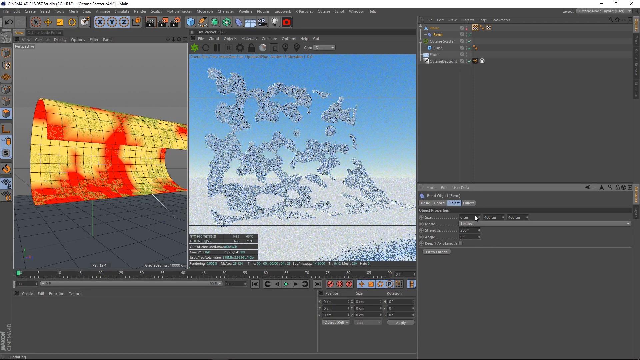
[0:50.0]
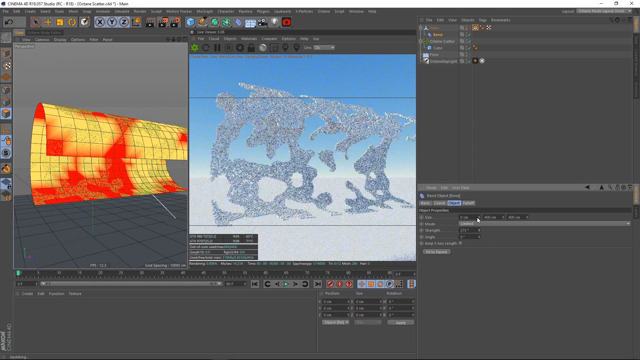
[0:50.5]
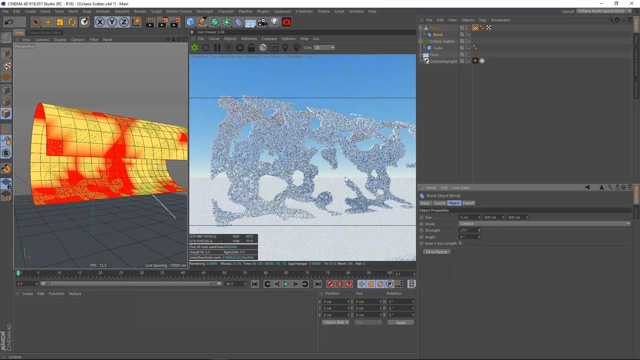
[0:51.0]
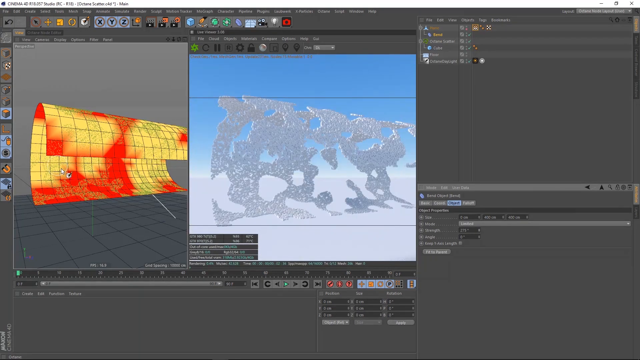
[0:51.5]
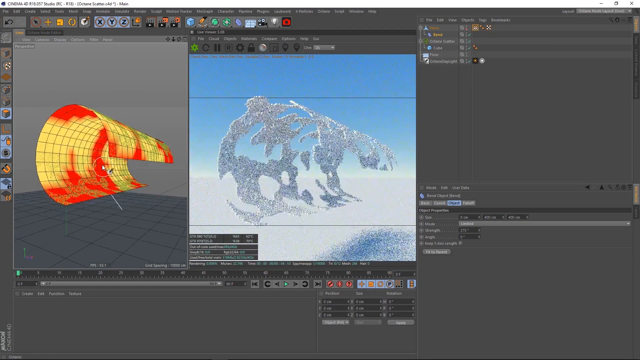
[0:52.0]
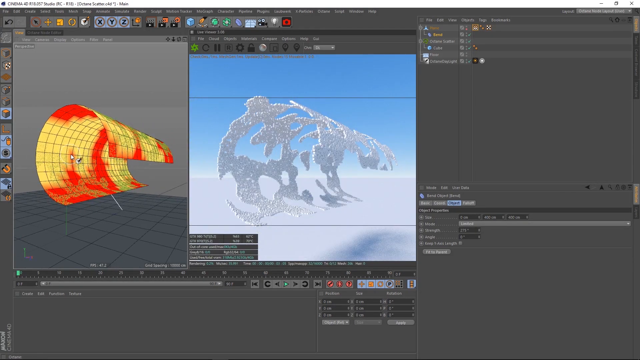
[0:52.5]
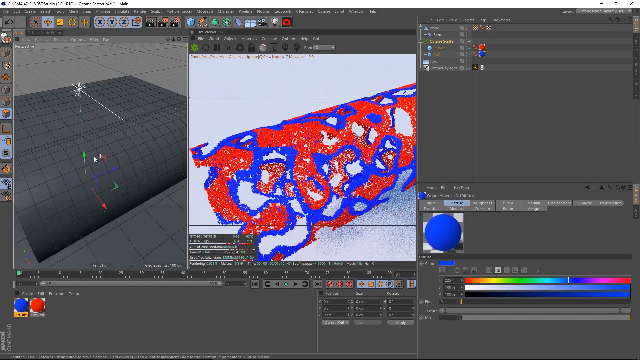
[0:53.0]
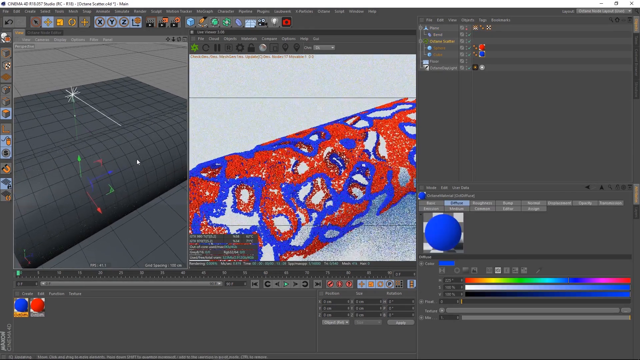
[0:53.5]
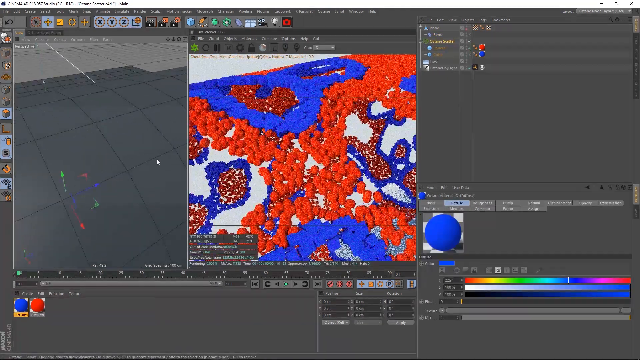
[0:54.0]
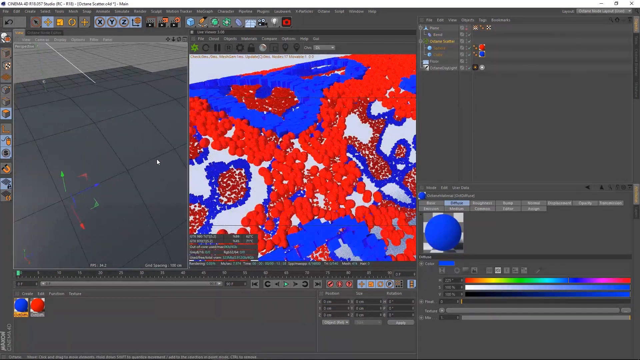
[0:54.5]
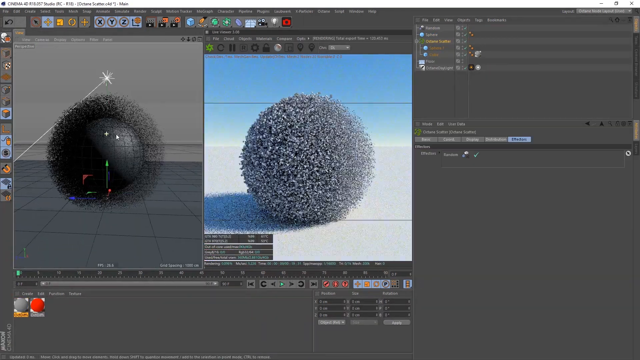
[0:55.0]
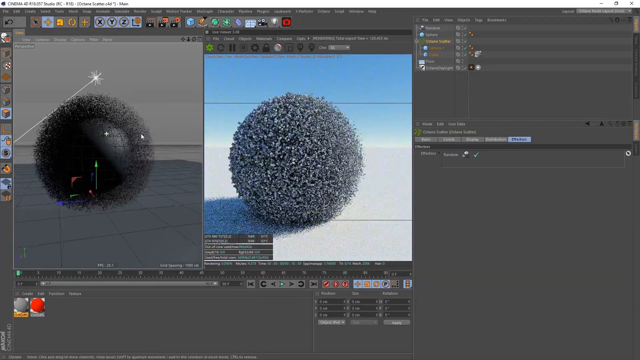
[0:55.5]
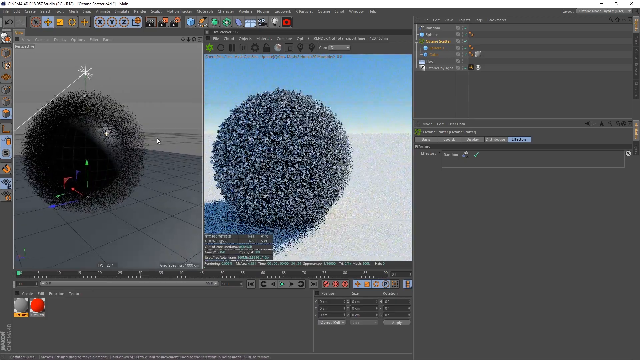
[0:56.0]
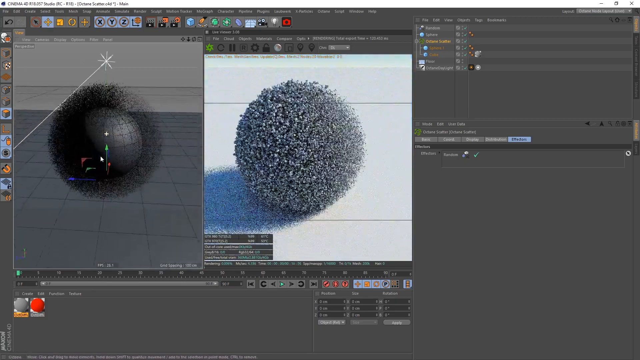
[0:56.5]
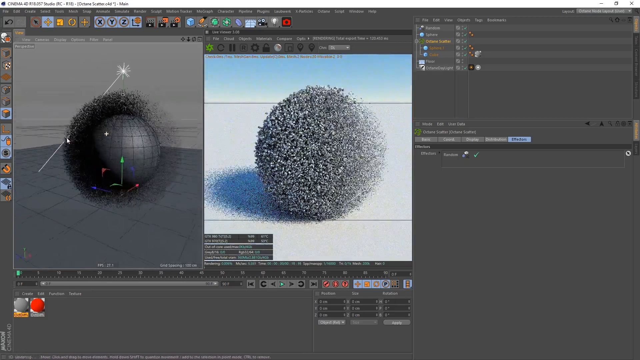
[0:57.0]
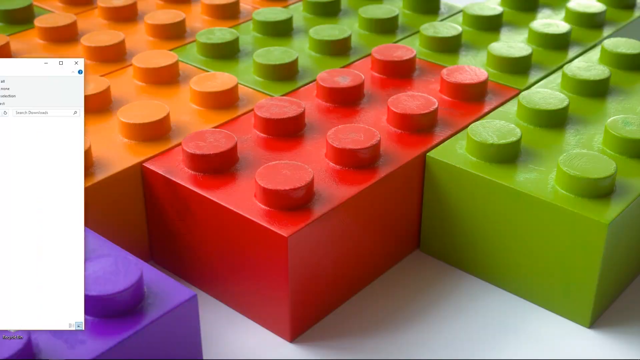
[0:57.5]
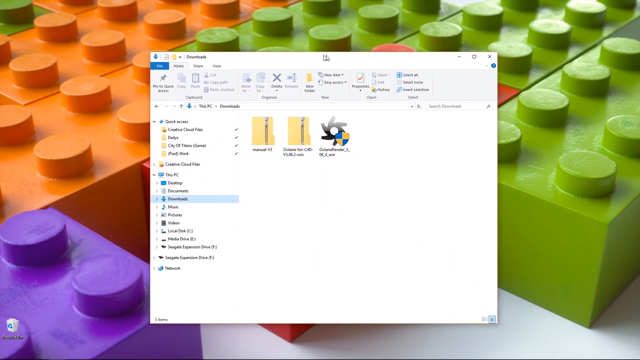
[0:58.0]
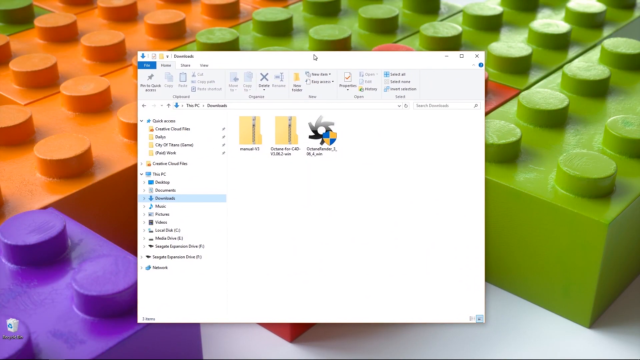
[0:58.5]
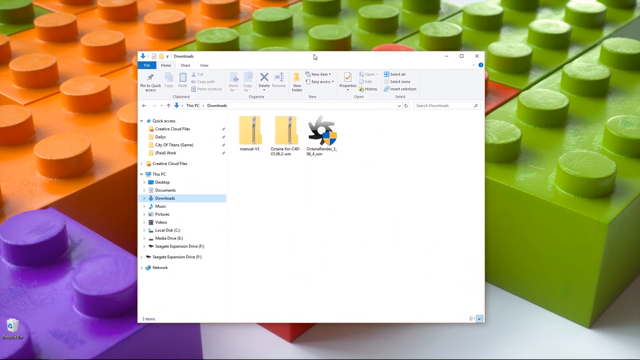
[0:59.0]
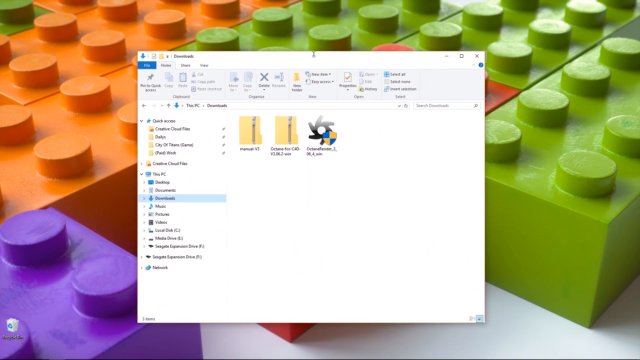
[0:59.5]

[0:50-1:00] In Cinema 4D, there is some form of yellow and orange object on the left side of the screen. The object is moved and bent downwards, as if it is a piece of paper being rolled up, slightly, so that it forms an archway. In the middle of the screen is the same shaped object, but where the orange colors are it is transparent, and where the yellow colors are it shows a material, creating a big slab that looks like it has holes in it. This one also bends over into an archway when the object on the left is bent. The screen cuts to a different object on the left and in the middle of the screen, which looks more like a tube. The version in the center is red and blue, while the one on the left is all gray. The view zooms into this, and then cuts to another object in Cinema 4D: on the left it looks like a circle with a bunch of fuzz around it, all black, and on the right a rendered version looks like a gray and white ball of fuzziness. The screen then cuts to the desktop home screen, where an open folder is pulled into the center of the screen.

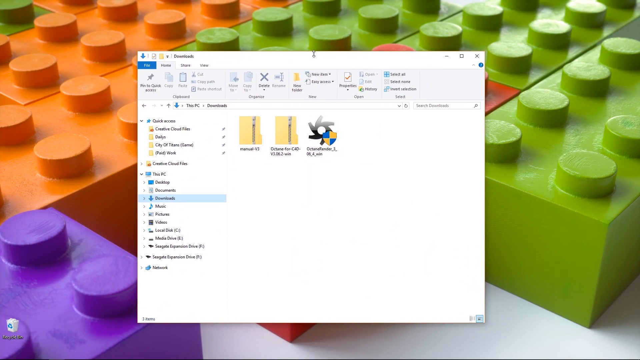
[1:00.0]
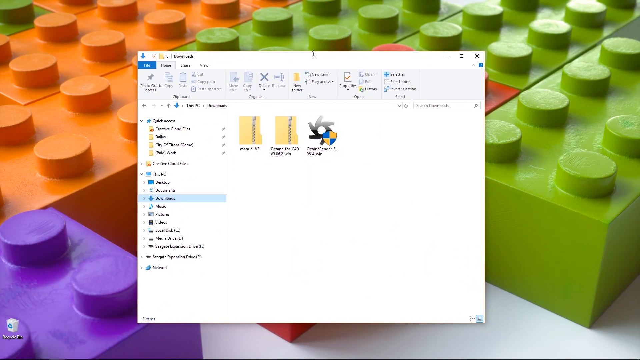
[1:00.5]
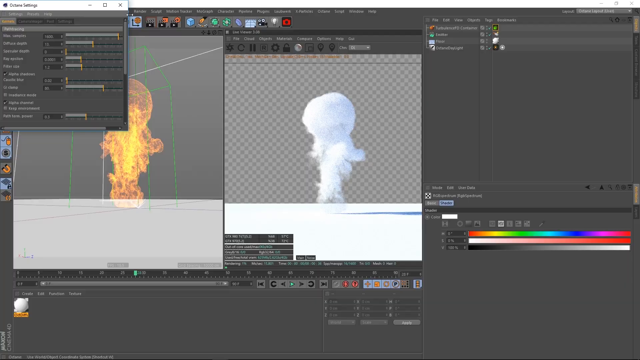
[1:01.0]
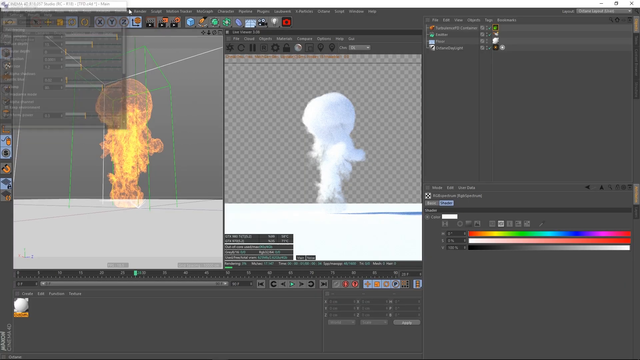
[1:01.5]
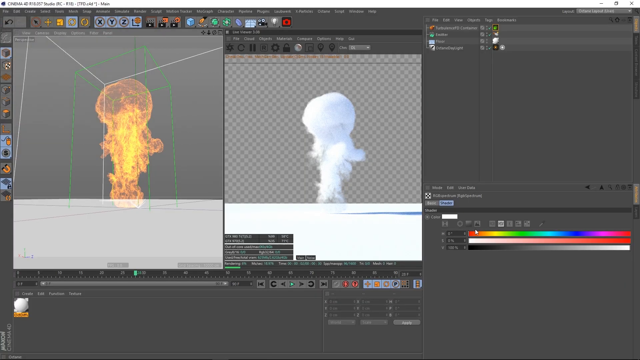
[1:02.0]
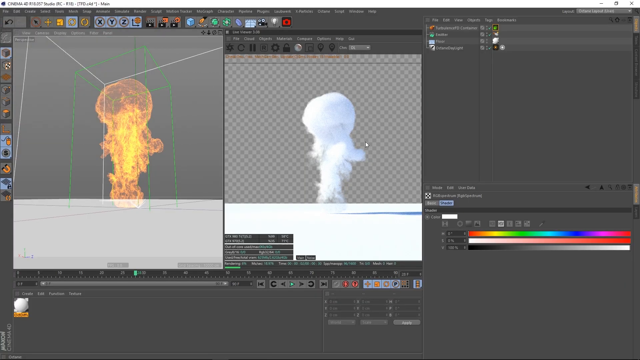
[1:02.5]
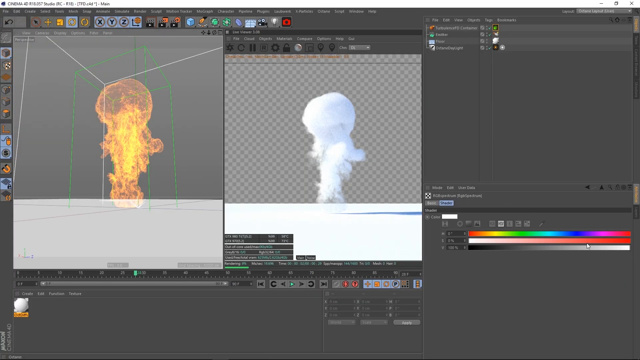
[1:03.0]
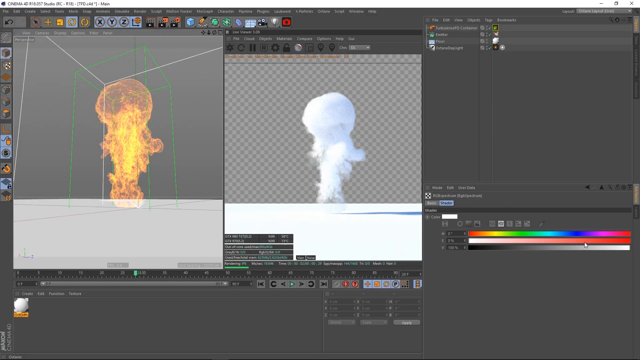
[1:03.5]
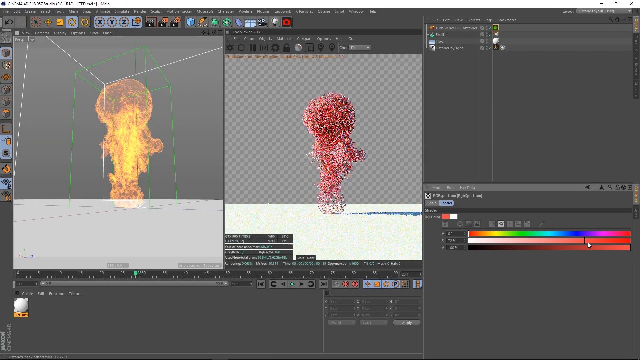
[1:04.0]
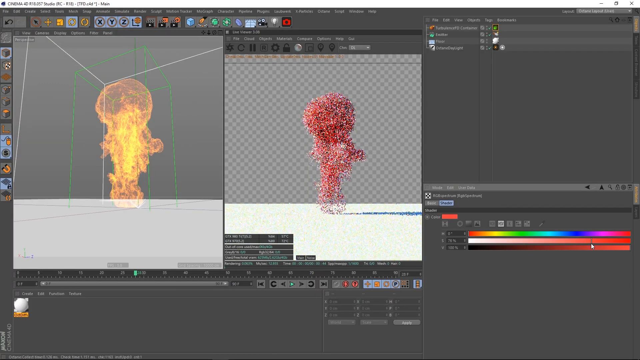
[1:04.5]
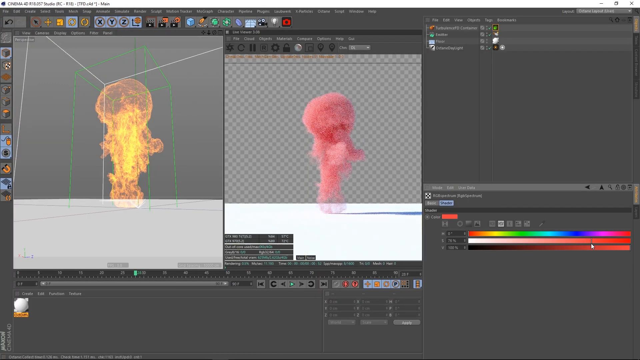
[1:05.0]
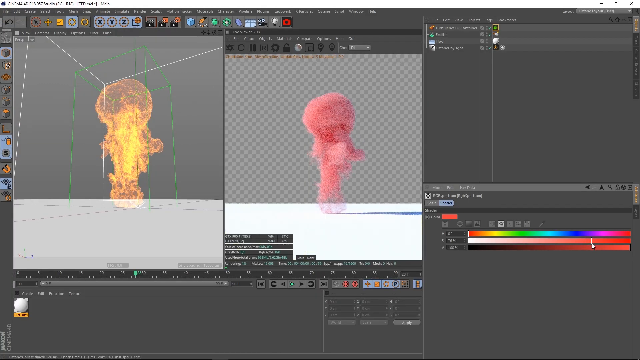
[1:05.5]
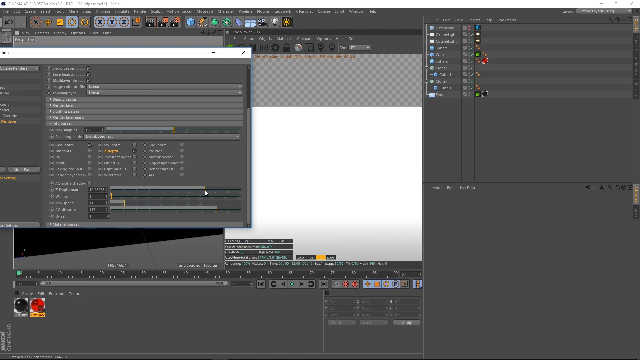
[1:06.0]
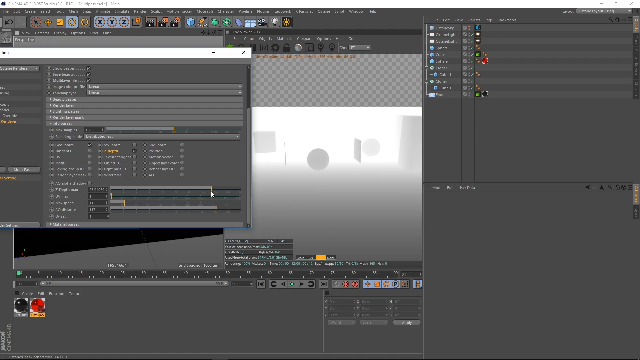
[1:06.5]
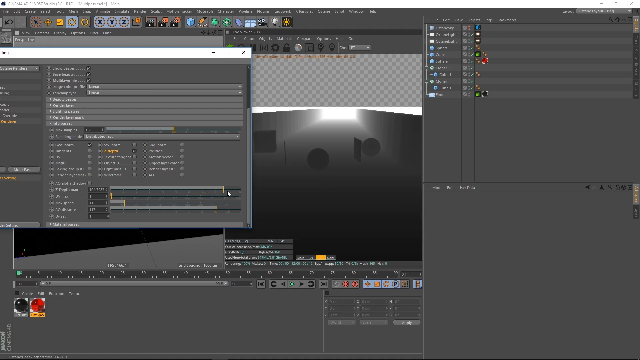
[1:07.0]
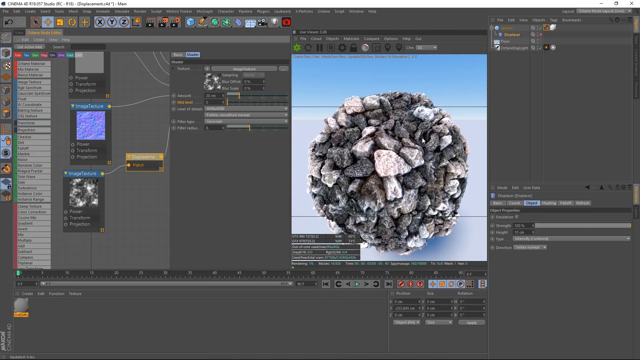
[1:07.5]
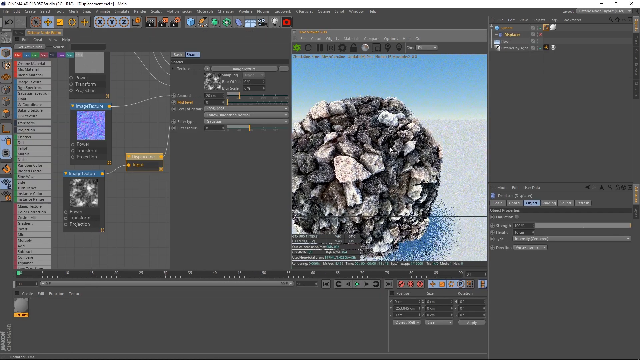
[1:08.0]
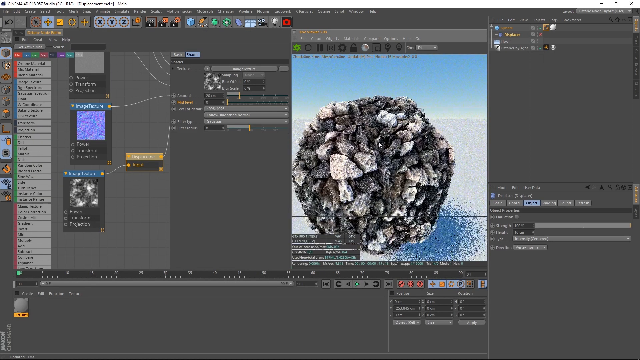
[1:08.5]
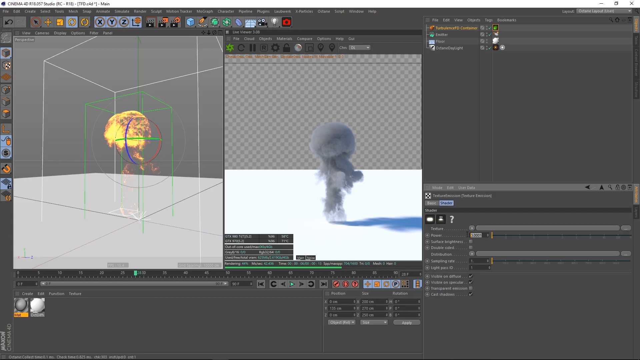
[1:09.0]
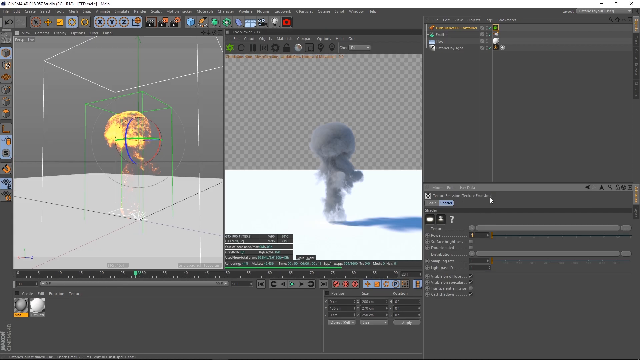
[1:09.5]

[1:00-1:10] The desktop background shows Lego pieces very close up in HD; some are green, some are orange, and one is purple. Documents and files are in the center of the screen, and the open folder is on its download section, which holds three files. The video switches back to Cinema 4D, where an object on the left looks like an explosion. In the middle of the screen, its rendered version is white and then changes to a fluffy red that almost looks like smoke. These objects then disappear in Cinema 4D, and settings are changed in an open tab in the software. The video then switches to another Cinema 4D screen showing a rendered object of a rocky-looking ball in the center.